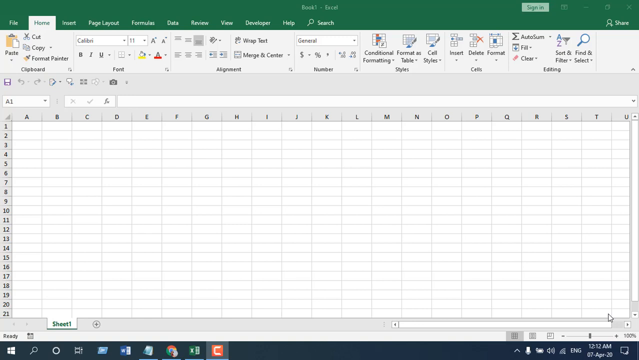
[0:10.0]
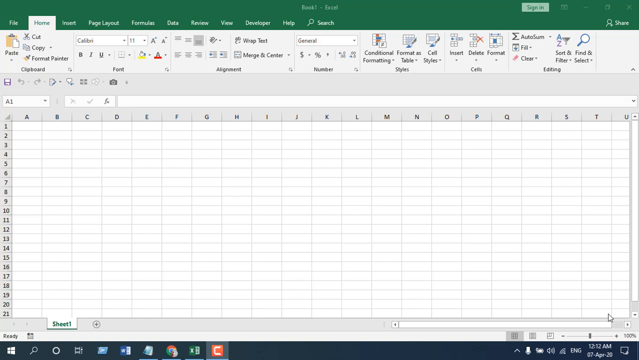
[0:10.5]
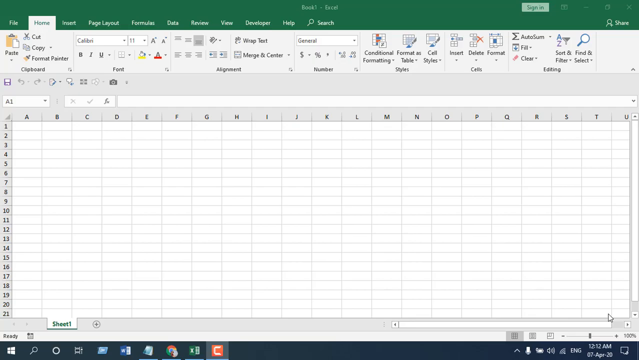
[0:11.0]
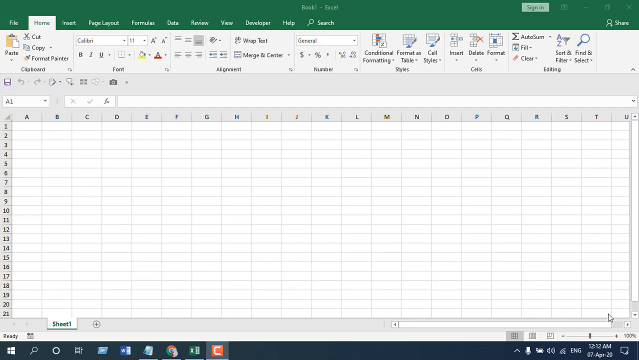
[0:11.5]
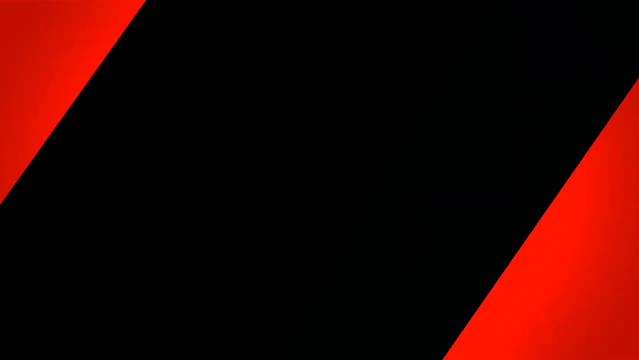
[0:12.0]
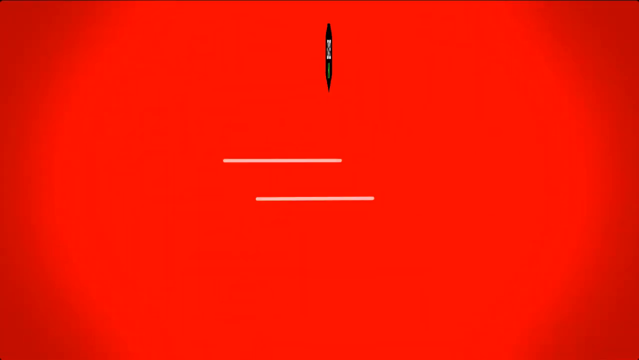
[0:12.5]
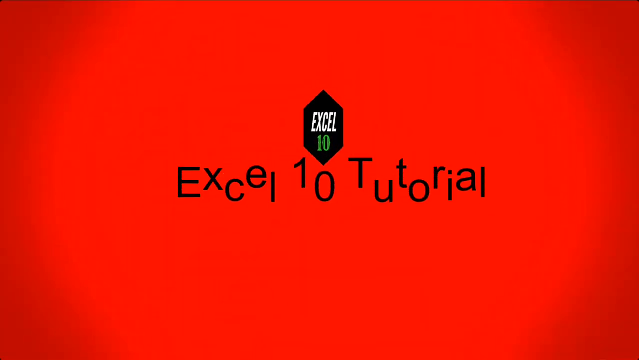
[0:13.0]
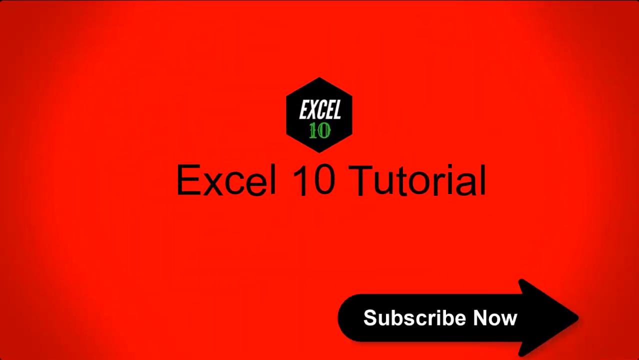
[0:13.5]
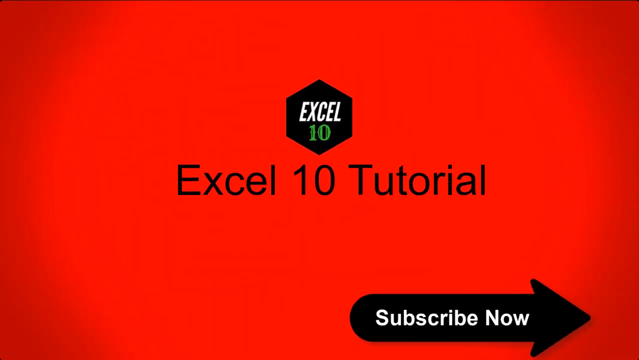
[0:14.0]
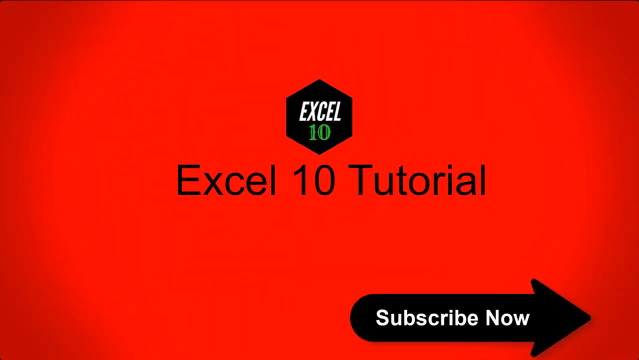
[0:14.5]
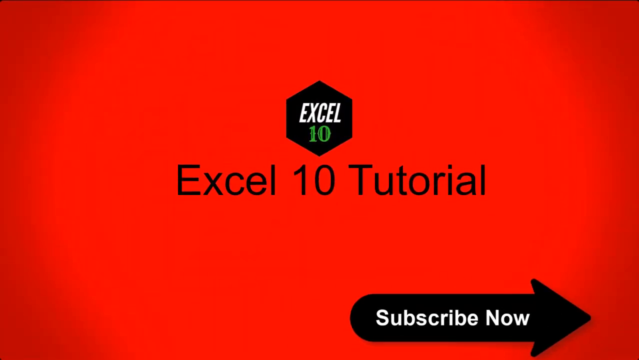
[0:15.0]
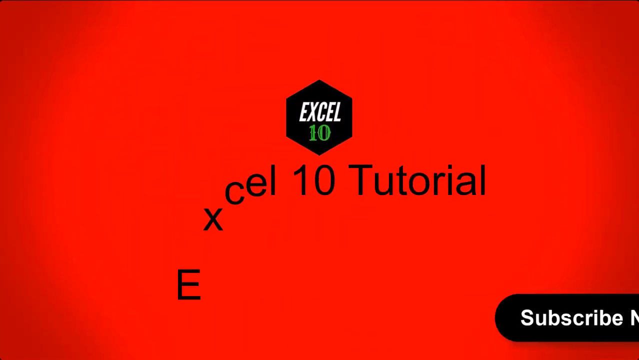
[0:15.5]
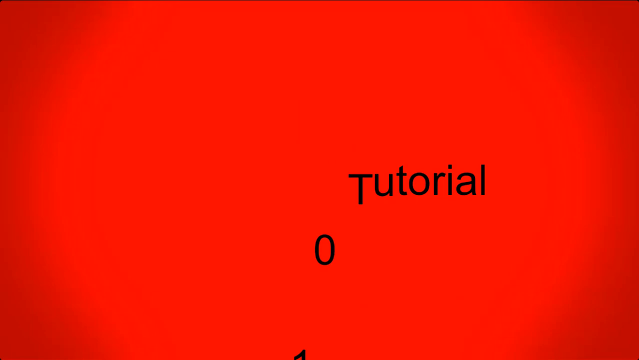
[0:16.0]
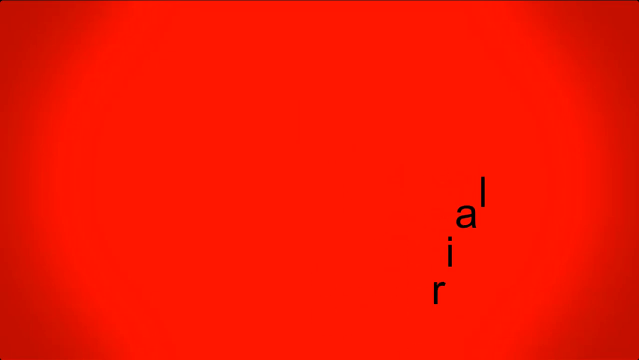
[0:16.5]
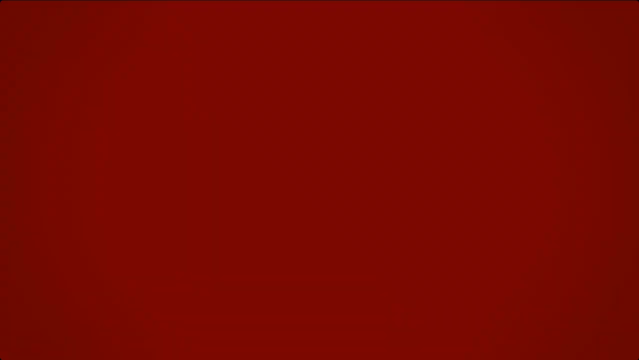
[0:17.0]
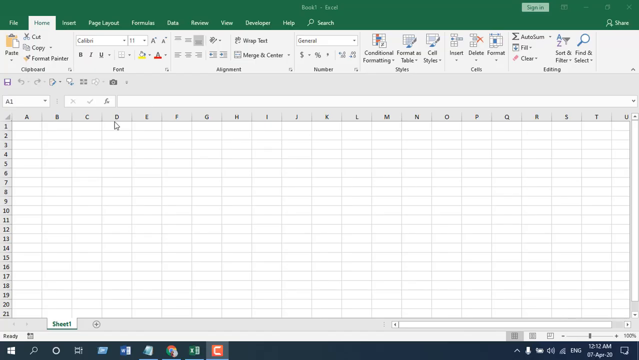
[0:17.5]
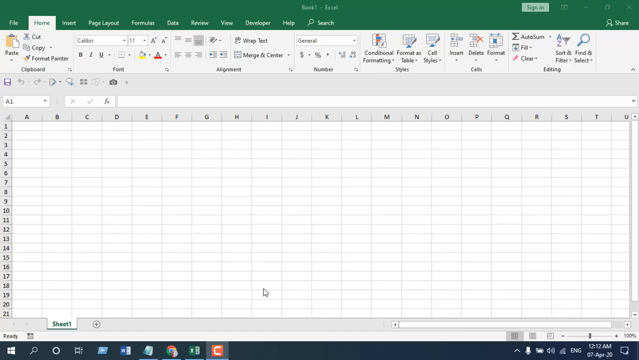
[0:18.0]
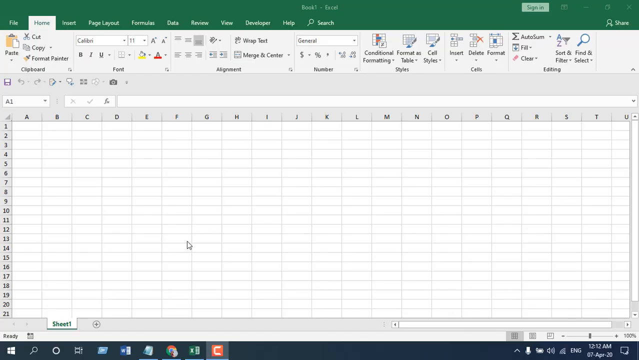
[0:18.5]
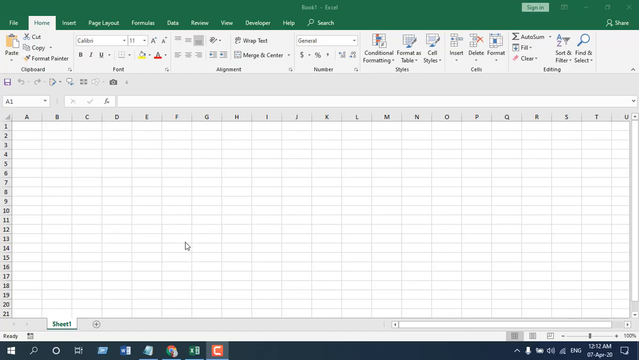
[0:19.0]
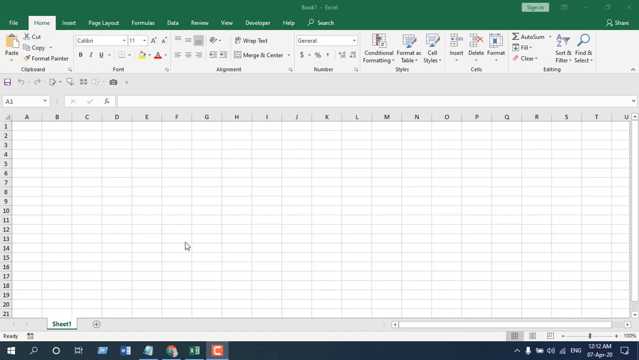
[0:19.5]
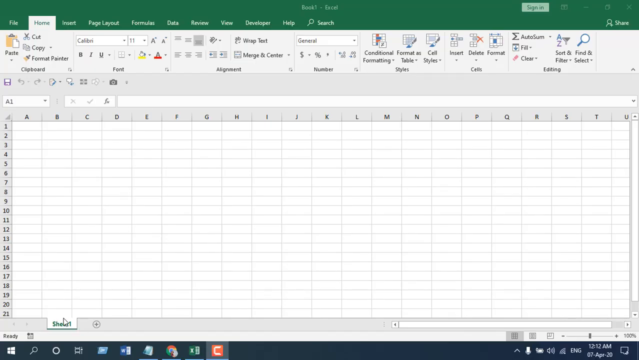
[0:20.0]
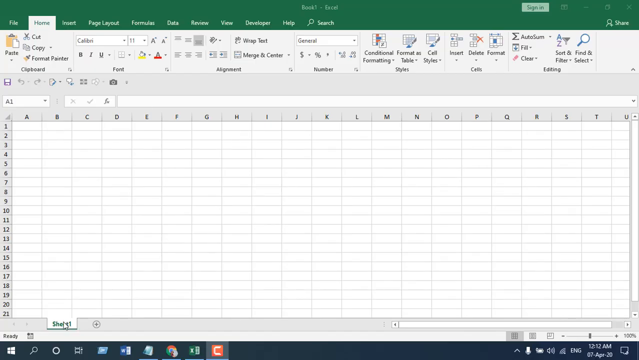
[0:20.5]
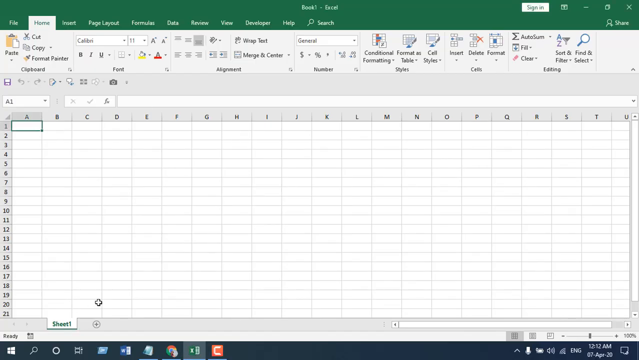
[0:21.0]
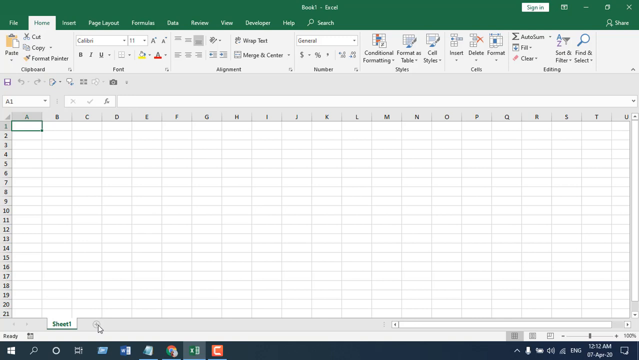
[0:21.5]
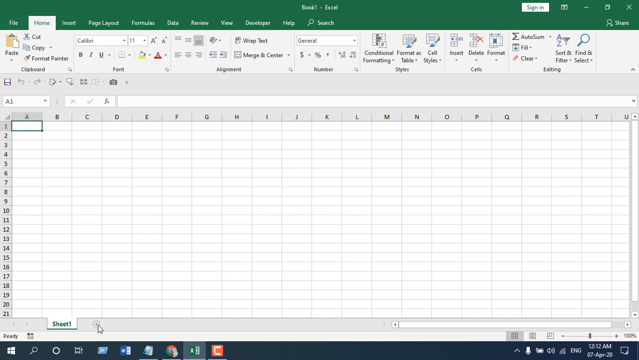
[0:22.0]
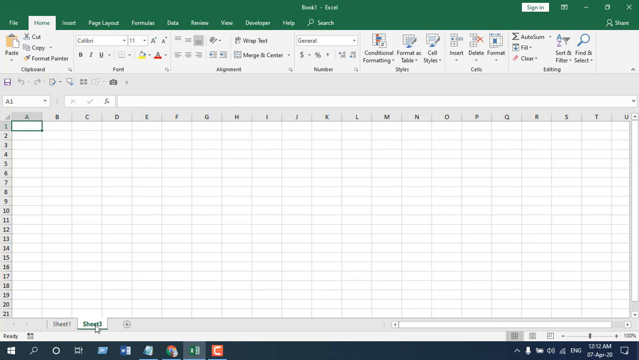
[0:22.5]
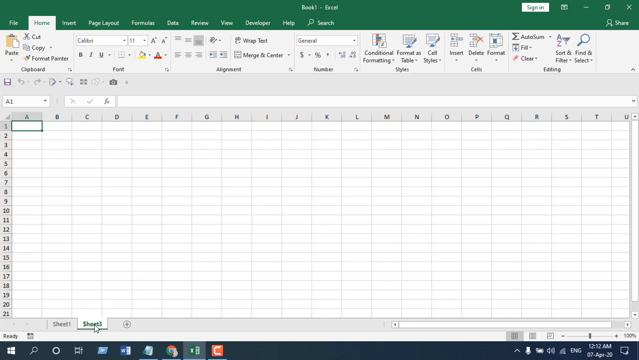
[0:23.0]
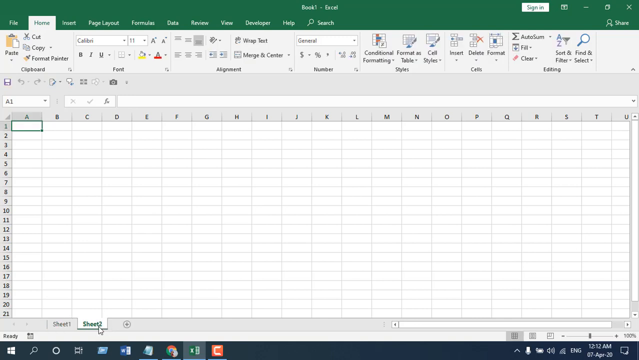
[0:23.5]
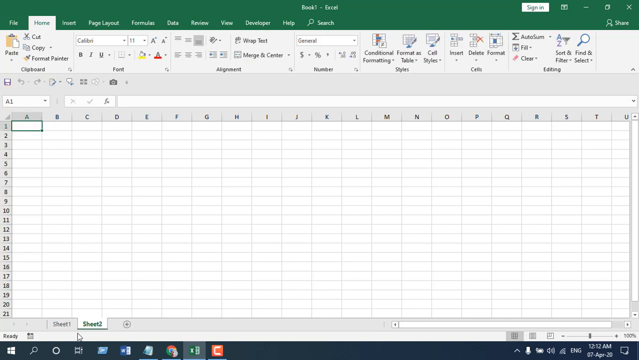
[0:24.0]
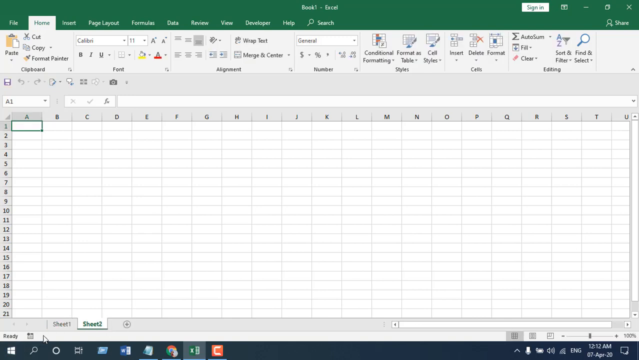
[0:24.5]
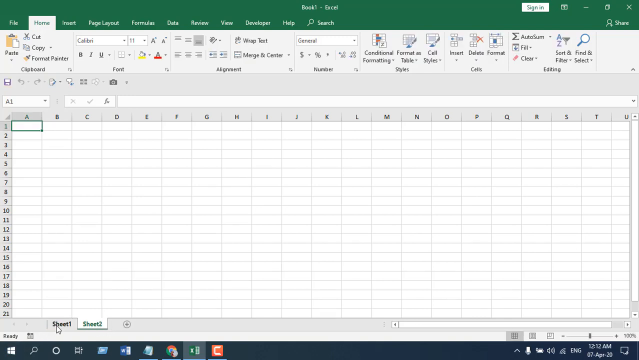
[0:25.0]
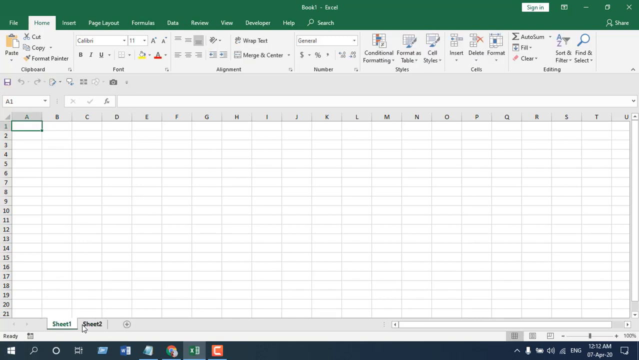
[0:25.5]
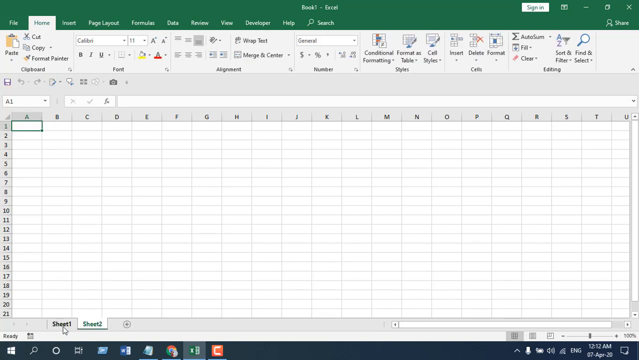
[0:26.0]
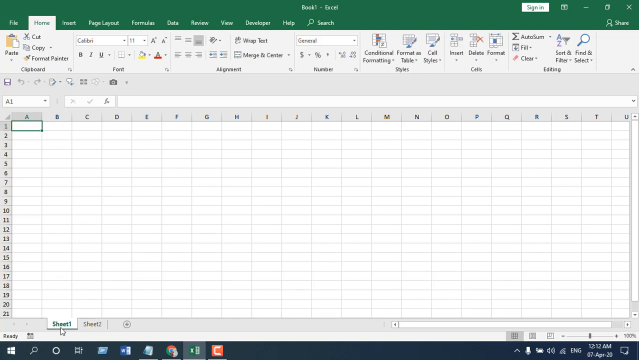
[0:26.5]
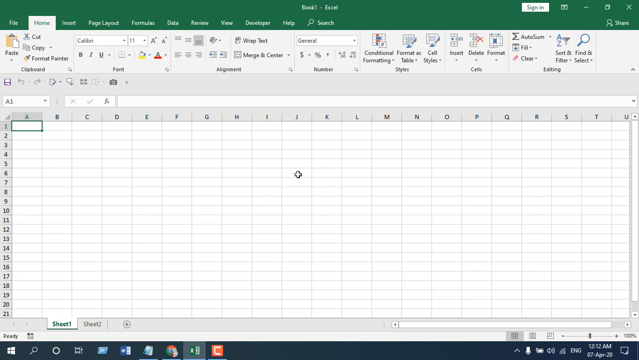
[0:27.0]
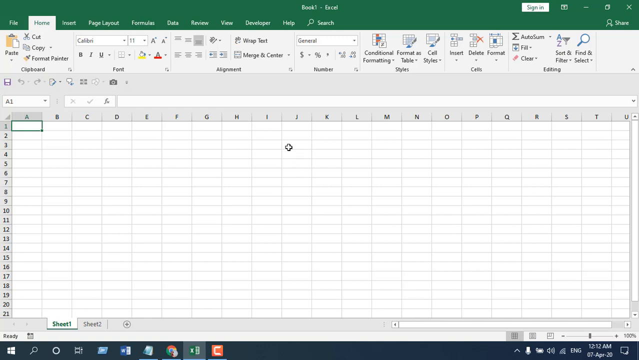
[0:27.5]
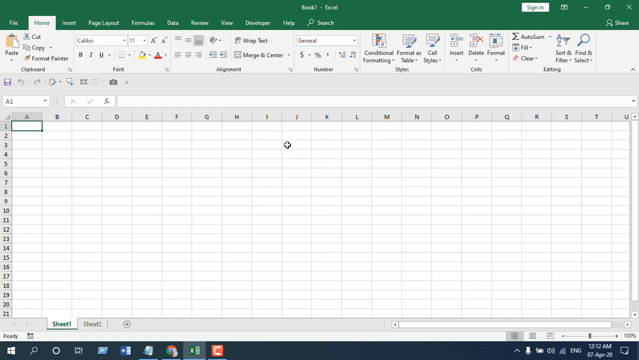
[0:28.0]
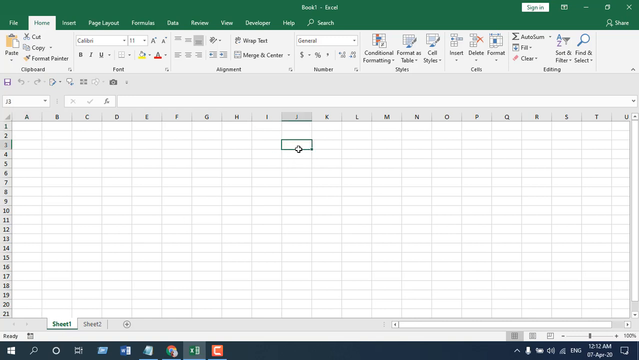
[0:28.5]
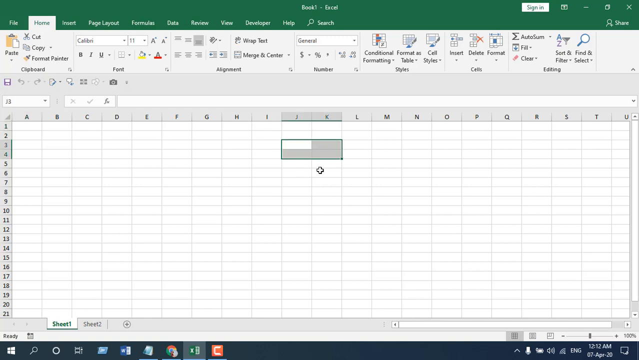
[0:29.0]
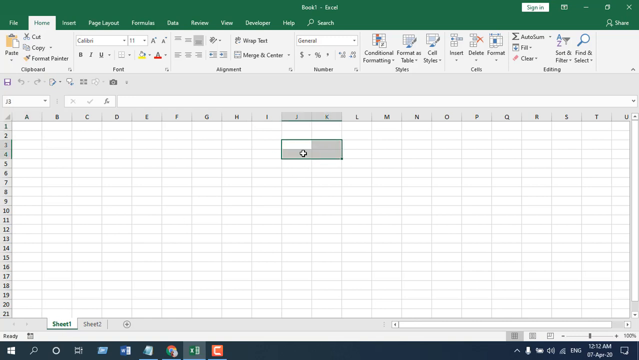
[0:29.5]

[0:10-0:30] A green stripe runs across the top of the screen, with words starting in the left-hand corner: "File," then to the right "Home," "Insert," "Page Layout," "Formulas," "Data," "Review," "View," "Developer" and "Help," followed by a small white magnifying glass and the word "Search." Beneath it, columns run from A to U left to right and rows go down from 1 to 21. The screen then turns red, and in the middle is a stop-sign-shaped octagon with the word "Excel" written in white inside and "10" underneath it. Below that is the text "Excel 10 Tutorial," and in the bottom left corner is a black arrow pointing to the right with "Subscribe Now" written in white inside it.